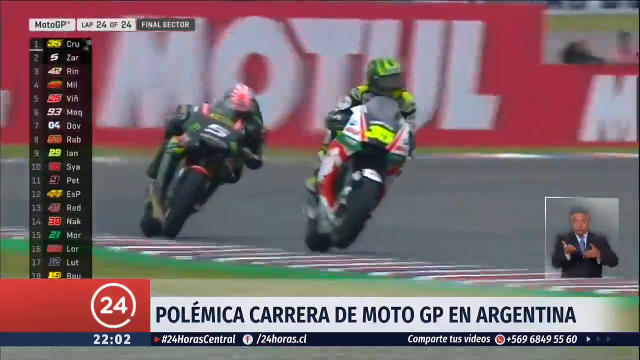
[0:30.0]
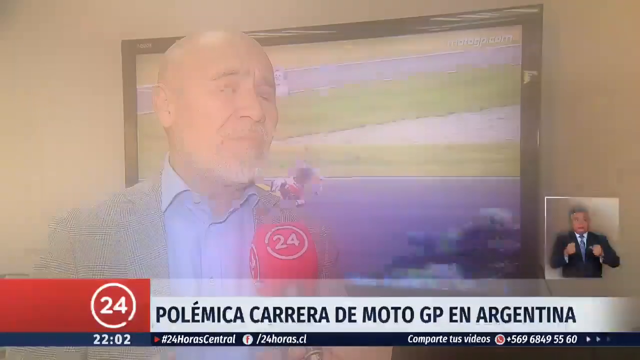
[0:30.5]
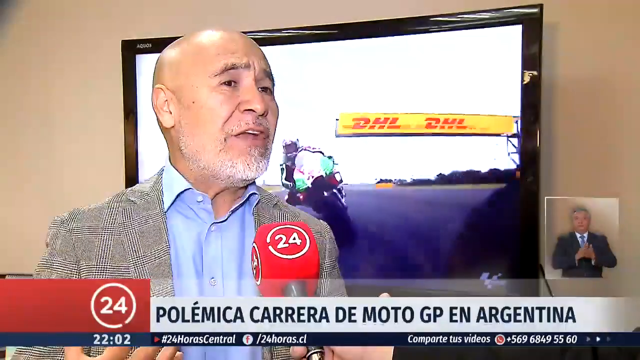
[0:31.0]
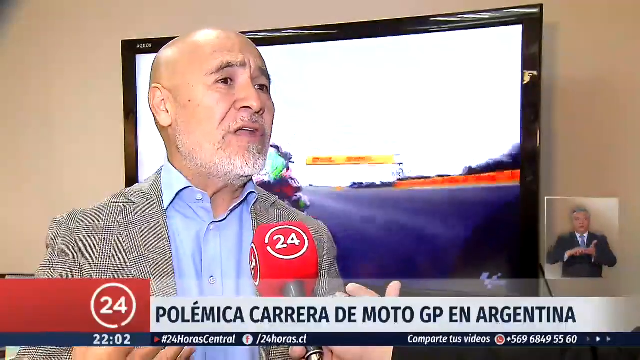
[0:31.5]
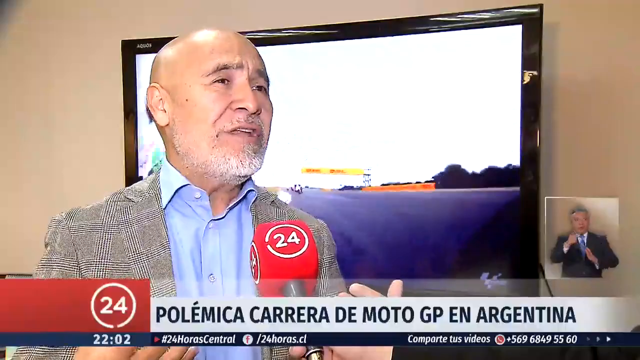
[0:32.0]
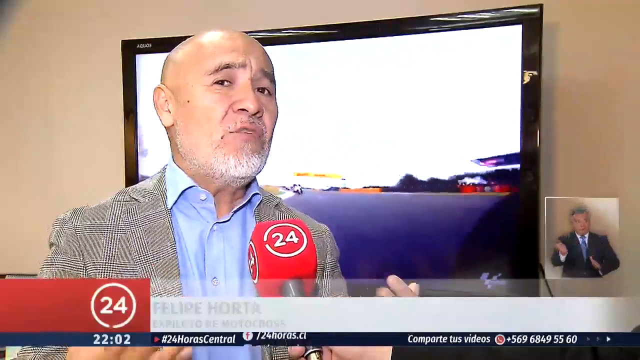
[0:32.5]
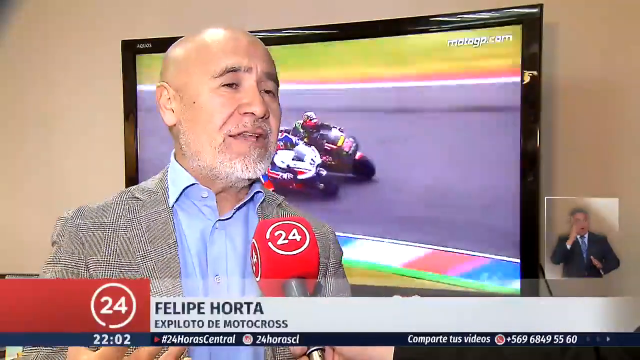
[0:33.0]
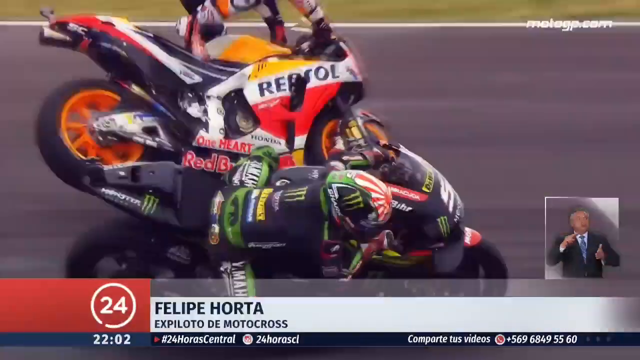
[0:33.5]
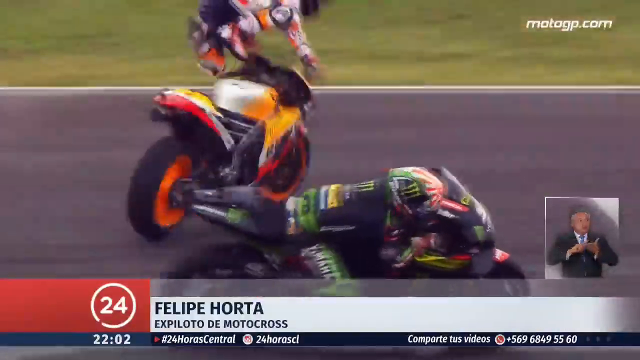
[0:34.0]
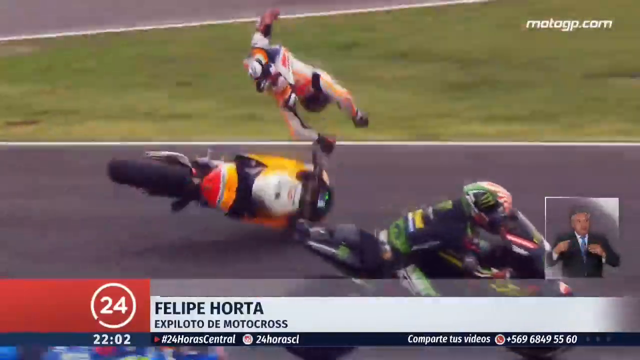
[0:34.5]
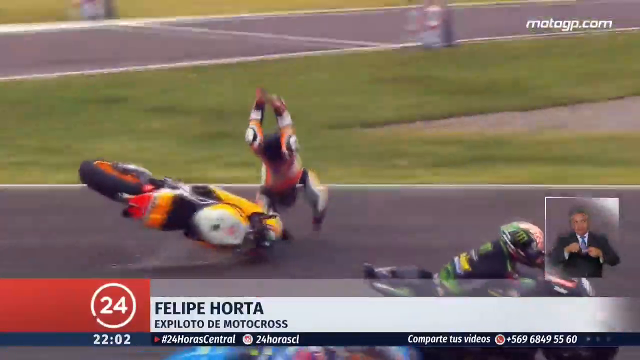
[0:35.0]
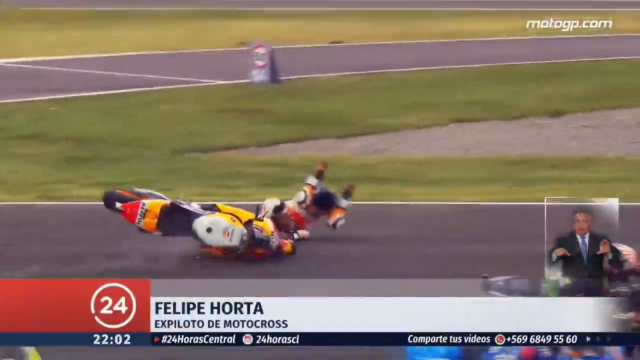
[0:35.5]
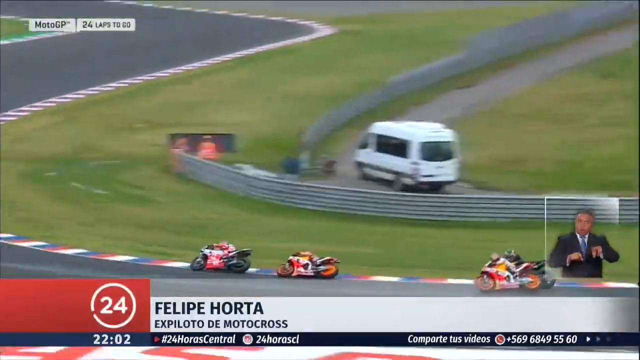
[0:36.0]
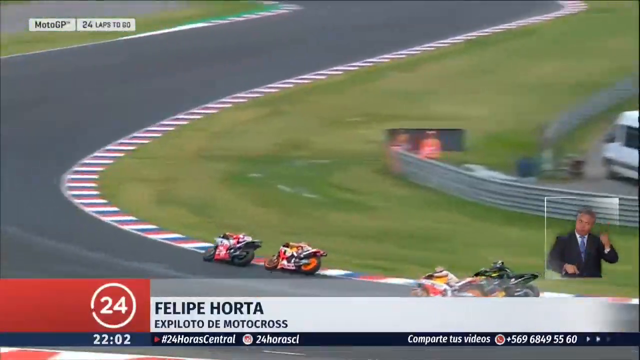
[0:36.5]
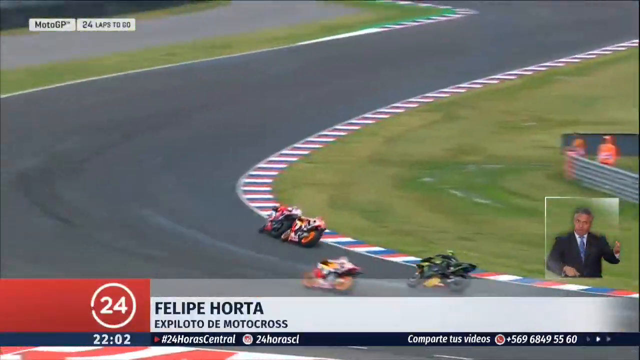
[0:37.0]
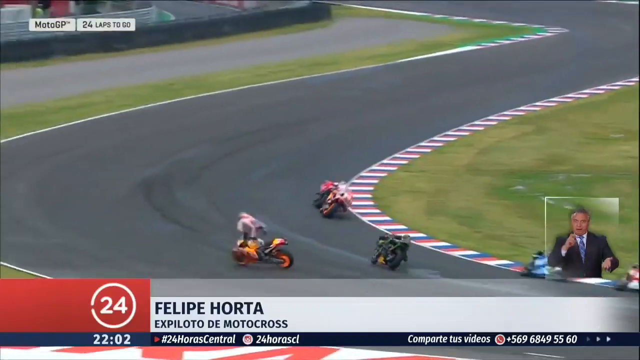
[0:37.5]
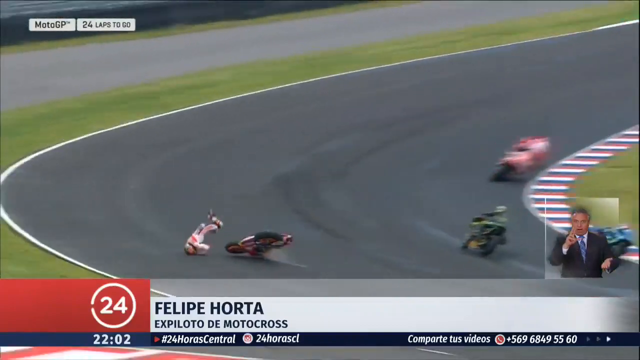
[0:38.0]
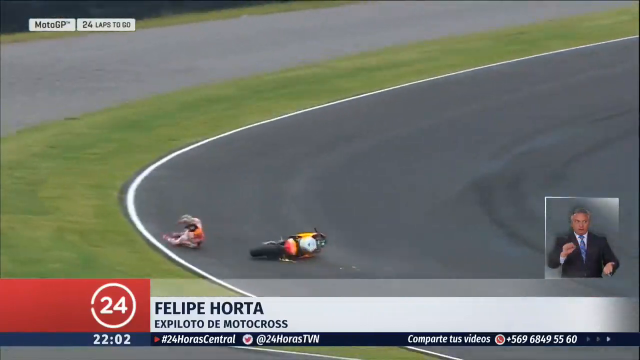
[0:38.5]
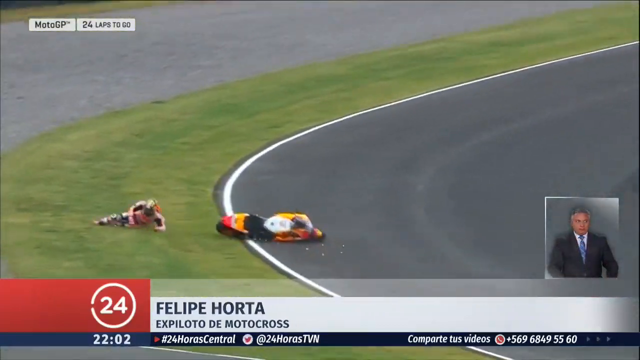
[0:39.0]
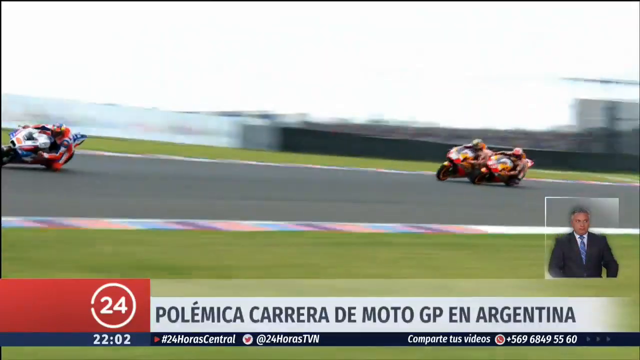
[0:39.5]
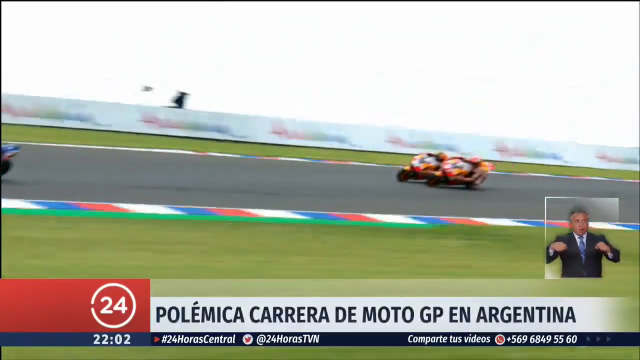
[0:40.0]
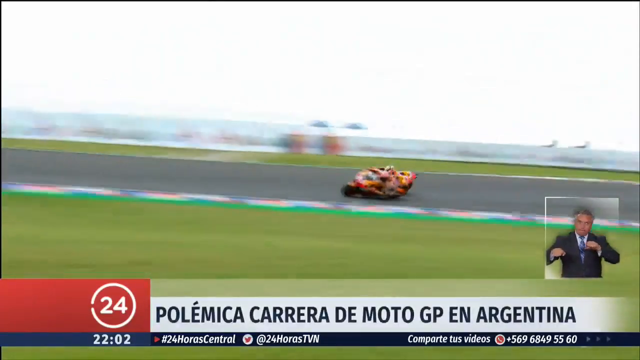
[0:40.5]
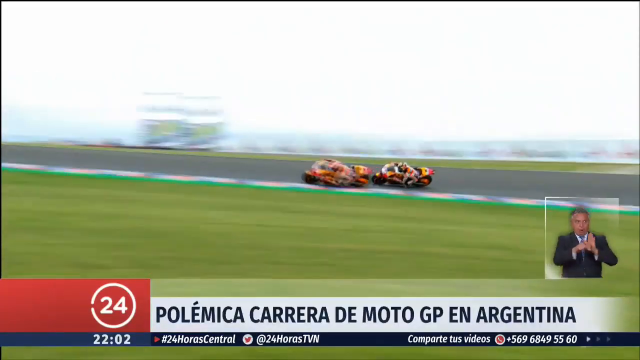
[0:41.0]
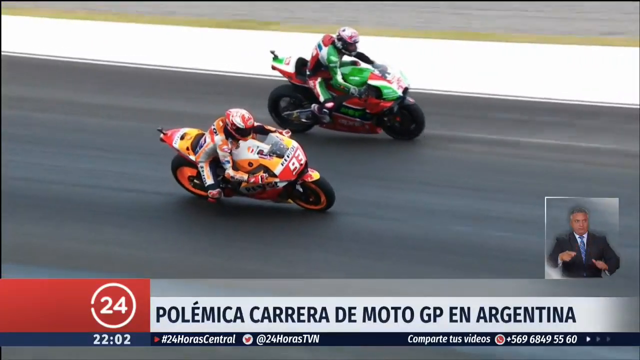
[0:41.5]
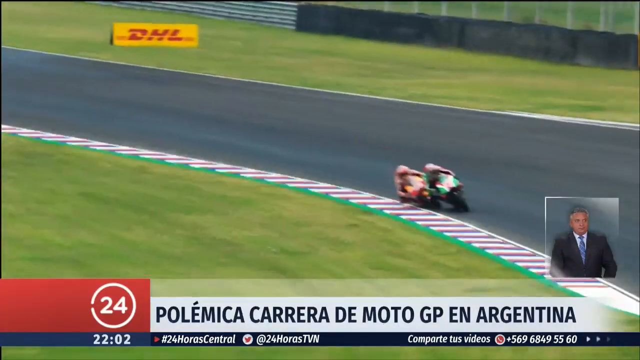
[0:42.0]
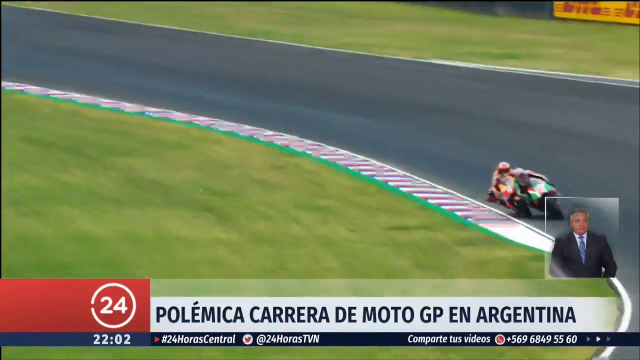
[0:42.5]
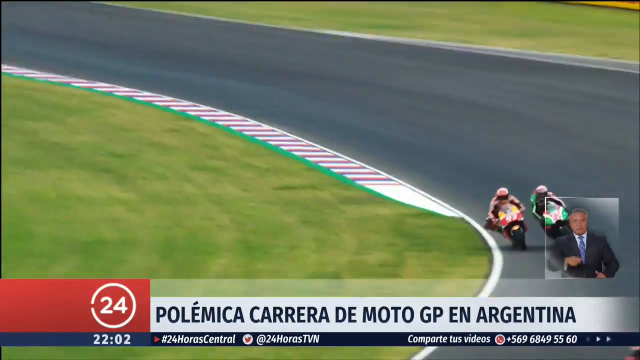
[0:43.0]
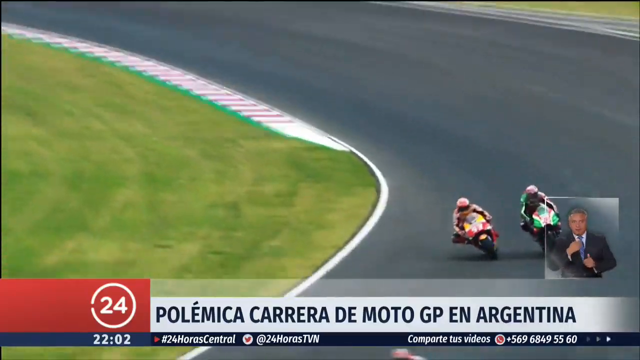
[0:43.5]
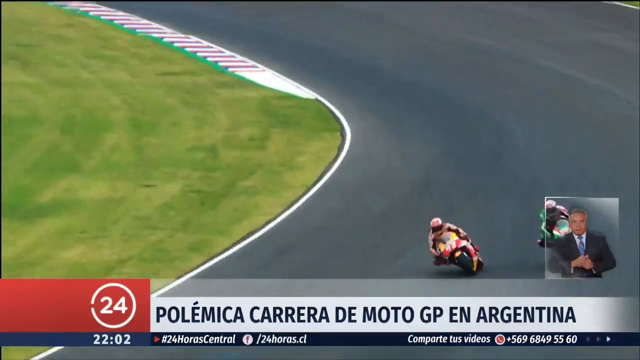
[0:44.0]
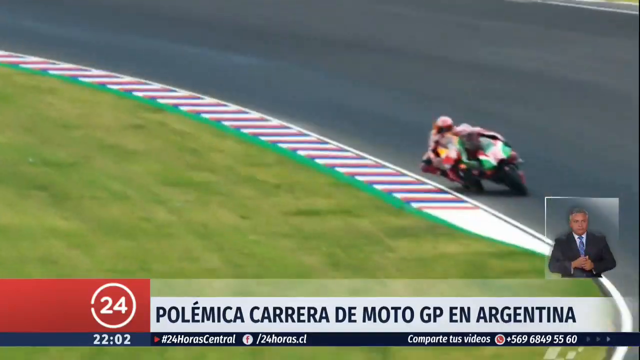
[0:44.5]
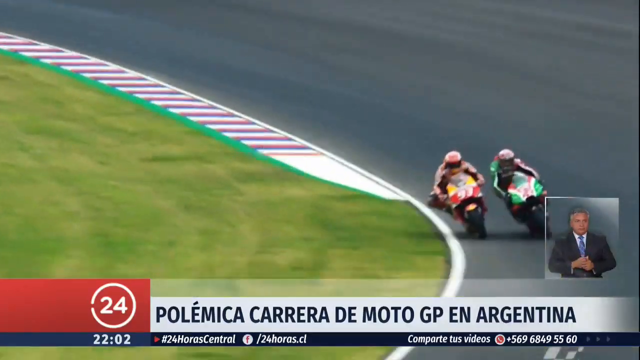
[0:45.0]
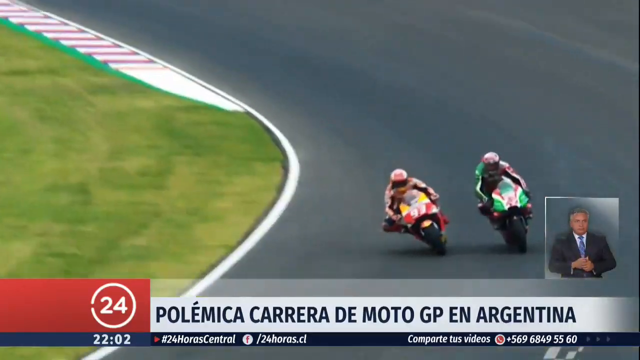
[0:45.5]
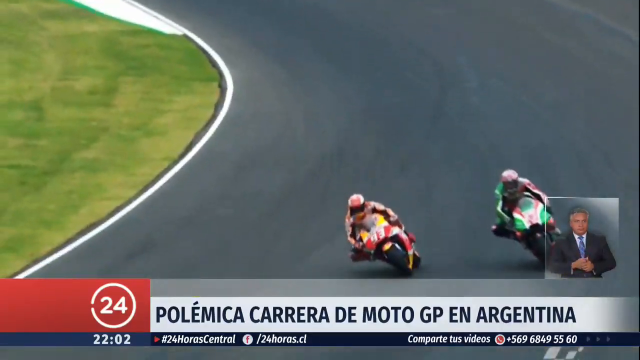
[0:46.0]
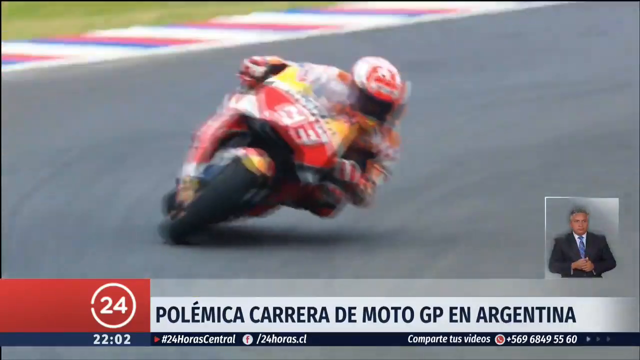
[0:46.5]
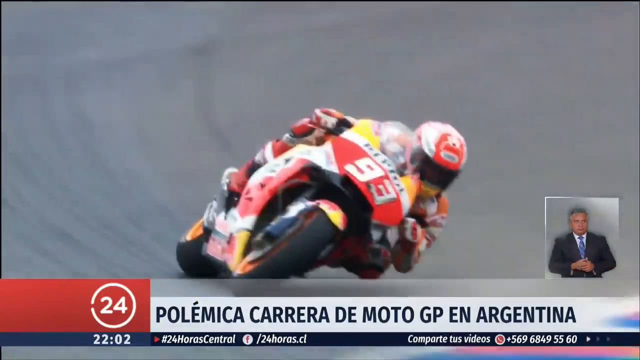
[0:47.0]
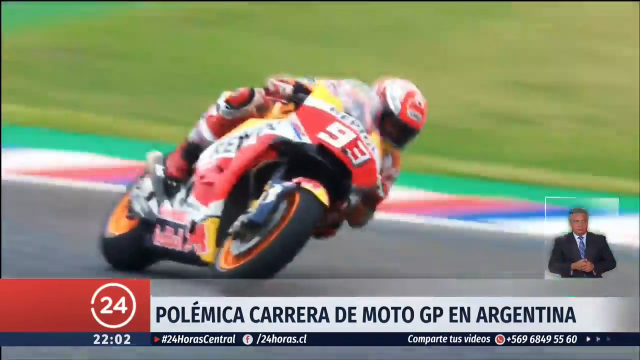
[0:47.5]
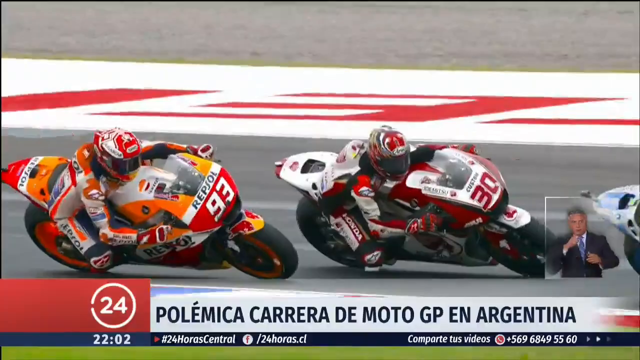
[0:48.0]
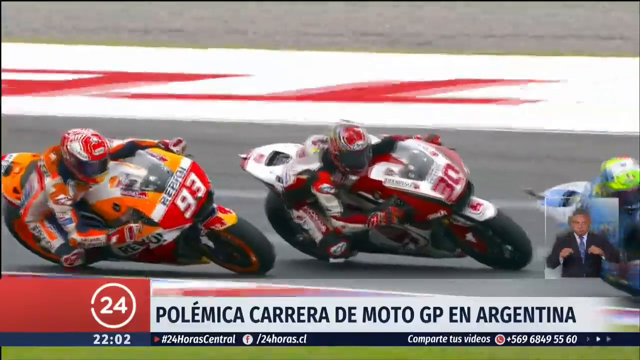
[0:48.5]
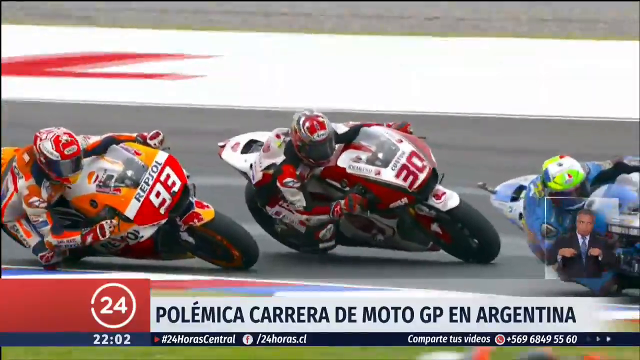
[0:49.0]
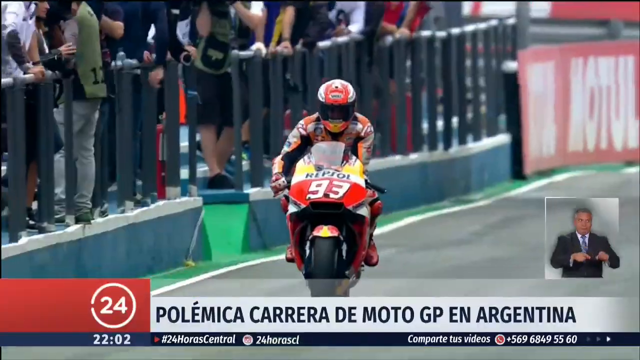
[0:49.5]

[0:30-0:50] Statistics appear on the left side of the screen, and a Motul sponsor in white lettering on a red background is behind two riders, one on a greenish motorcycle and one on a black motorcycle; their front wheels look like they are off the ground. A reporter interviews a man in kind of a gray suit and a blue shirt. The reporter's microphone is red with the number 24 in white. The man stands in front of a screen showing footage of a motorcycle race with a rider. More racers appear, and one racer flies off his motorcycle in a crash; the motorcycle has yellow or orange colors and red rims. The interpreter in the box on the right side is still interpreting. Another view shows the racer flying off his motorcycle around a turn on the racetrack, and other racers go around the track.